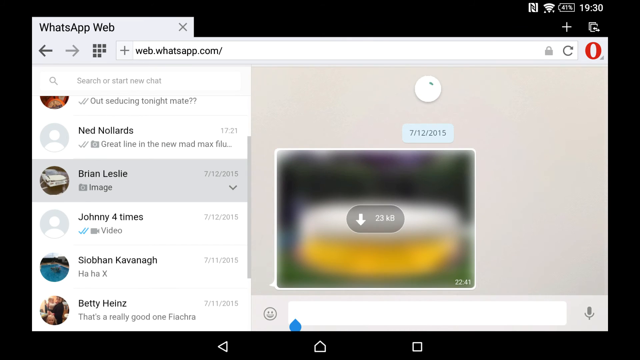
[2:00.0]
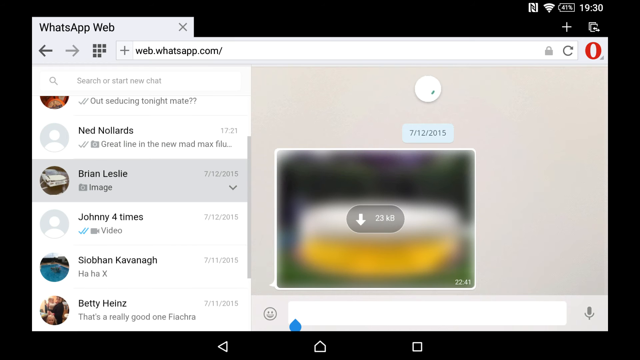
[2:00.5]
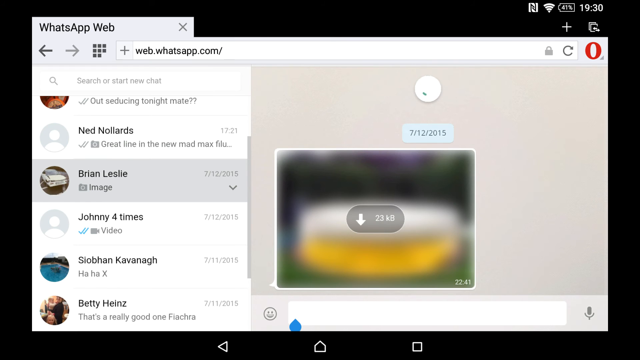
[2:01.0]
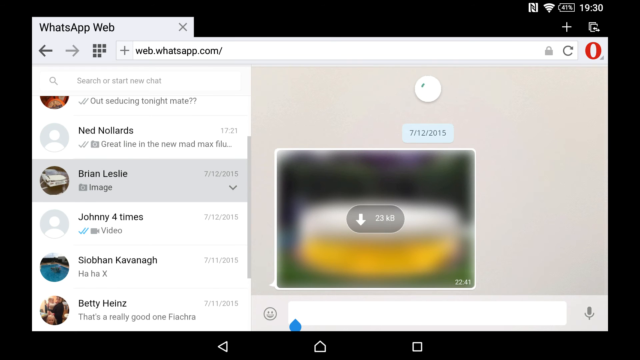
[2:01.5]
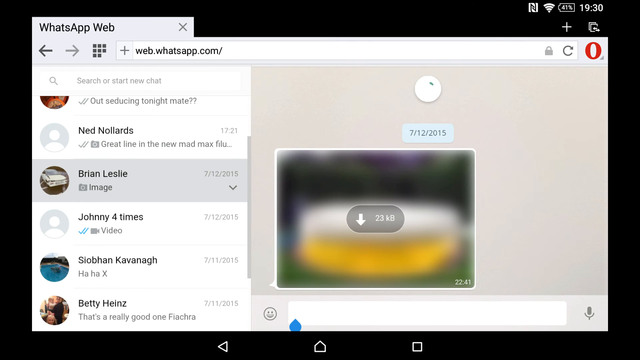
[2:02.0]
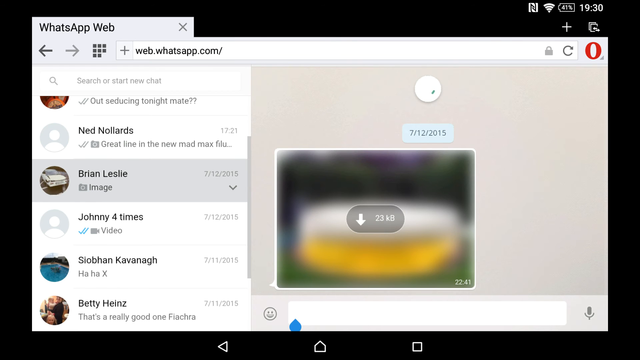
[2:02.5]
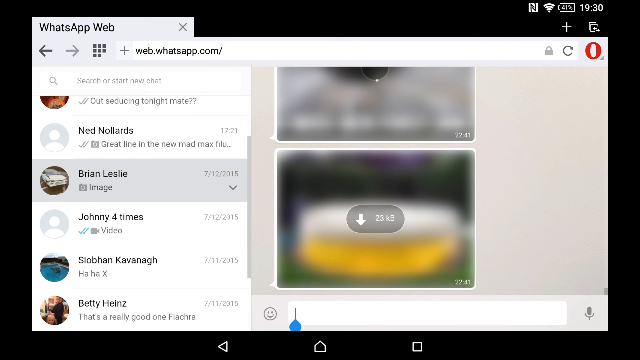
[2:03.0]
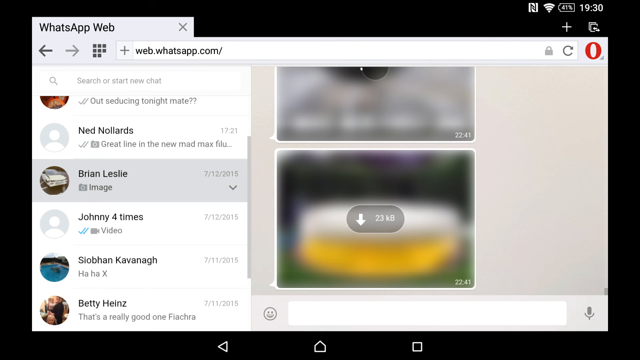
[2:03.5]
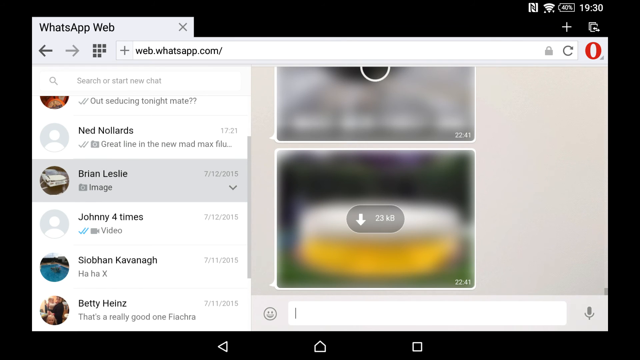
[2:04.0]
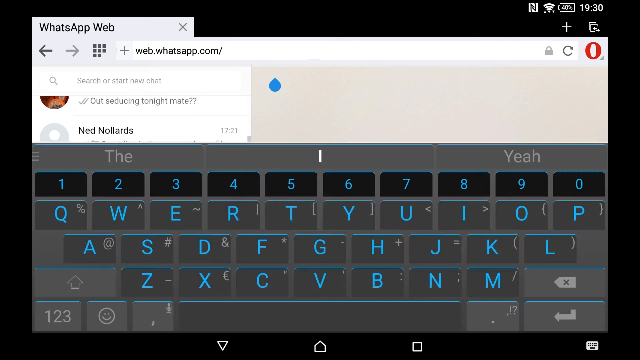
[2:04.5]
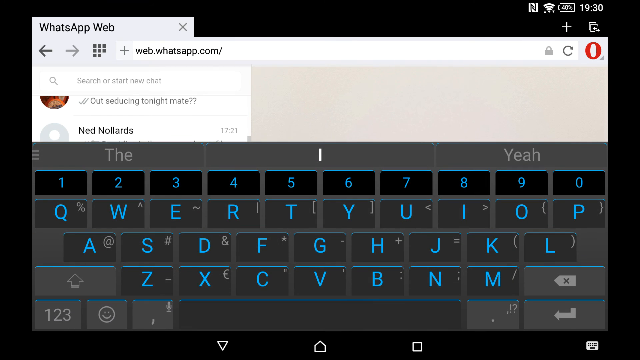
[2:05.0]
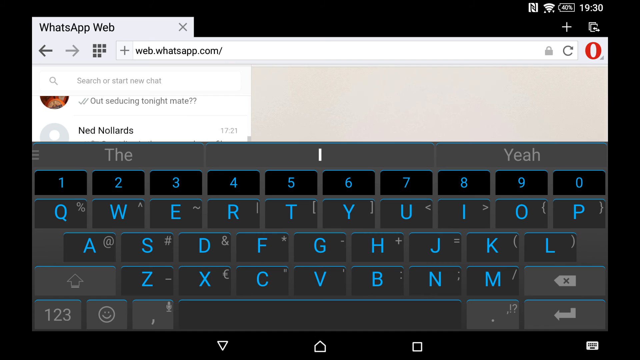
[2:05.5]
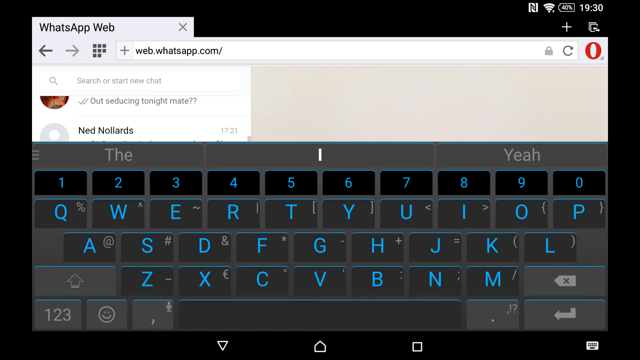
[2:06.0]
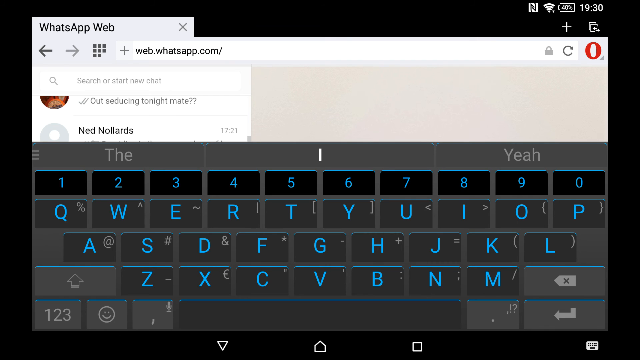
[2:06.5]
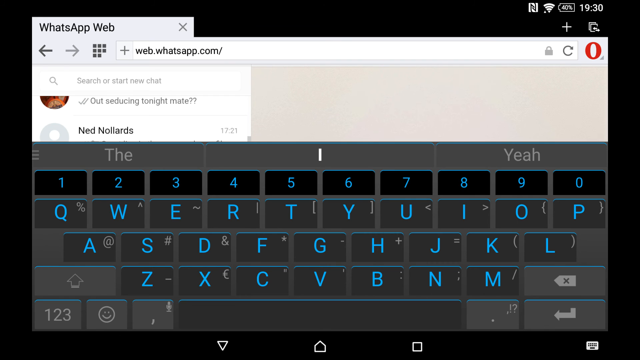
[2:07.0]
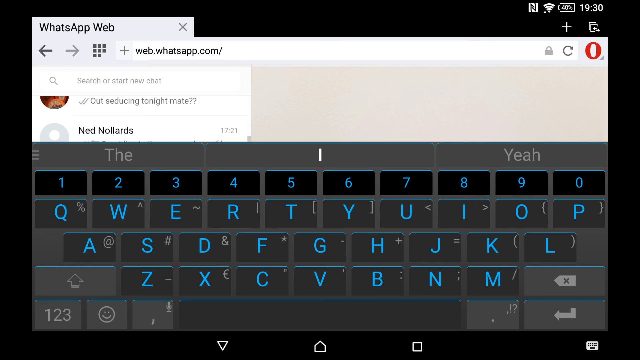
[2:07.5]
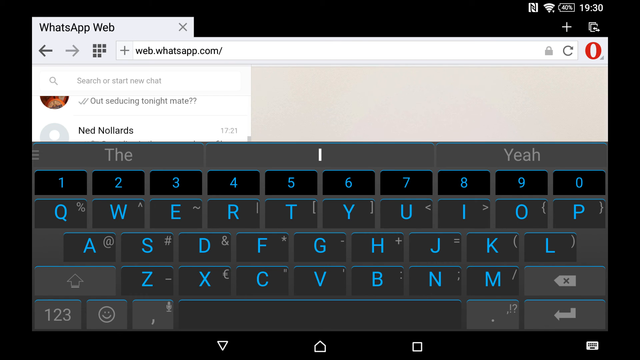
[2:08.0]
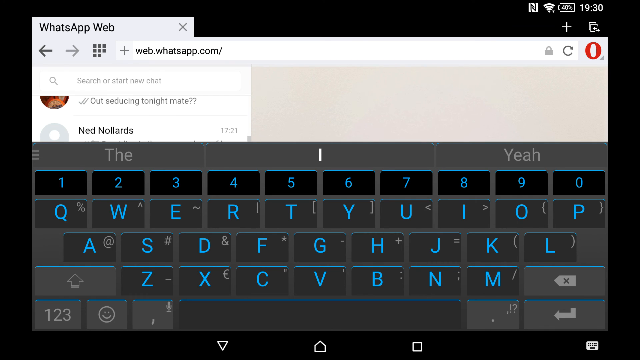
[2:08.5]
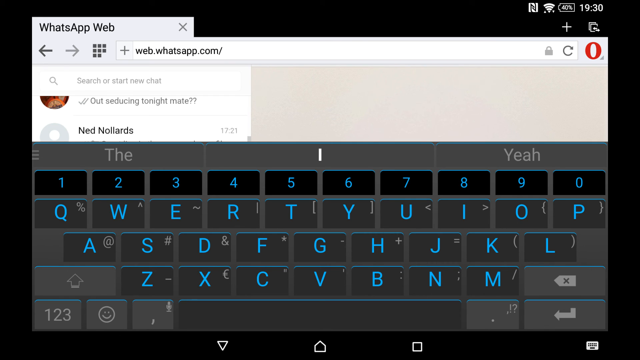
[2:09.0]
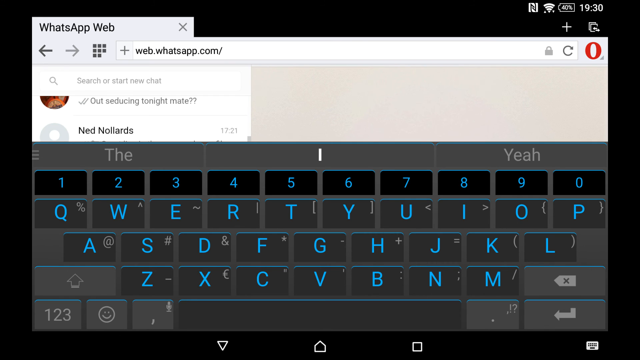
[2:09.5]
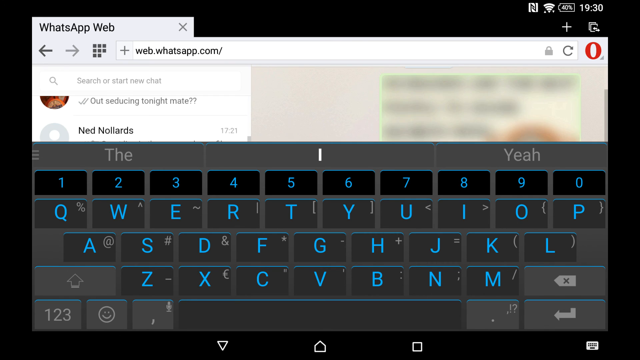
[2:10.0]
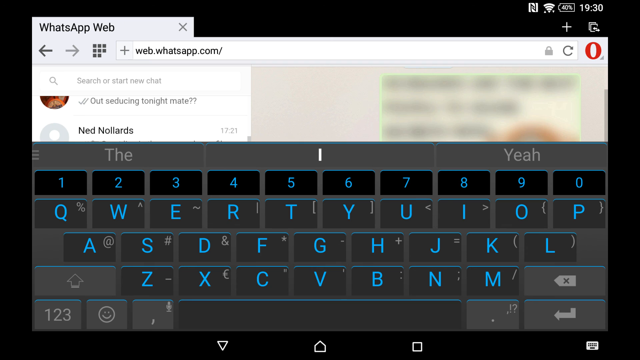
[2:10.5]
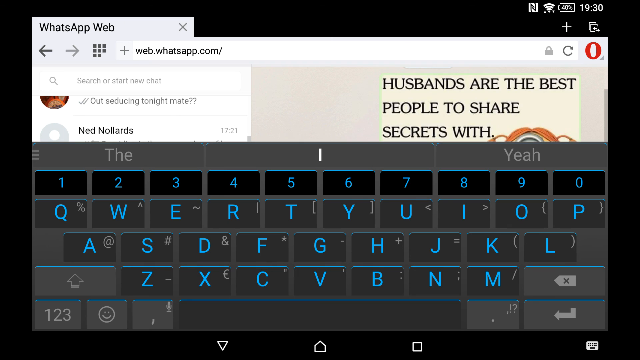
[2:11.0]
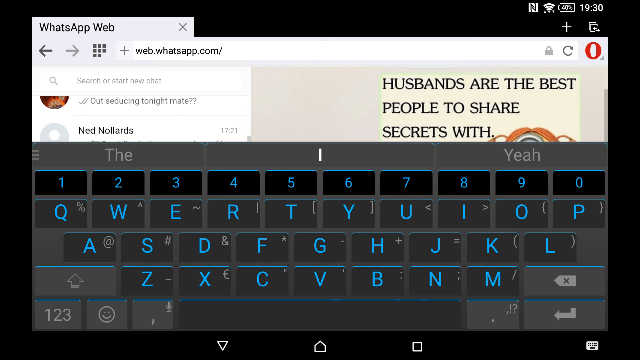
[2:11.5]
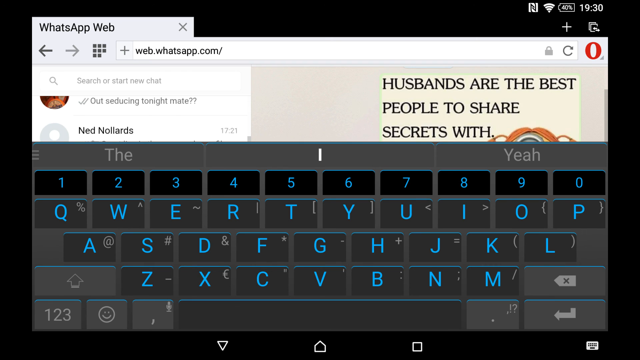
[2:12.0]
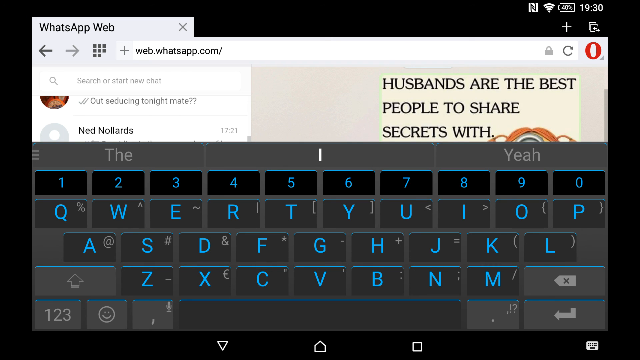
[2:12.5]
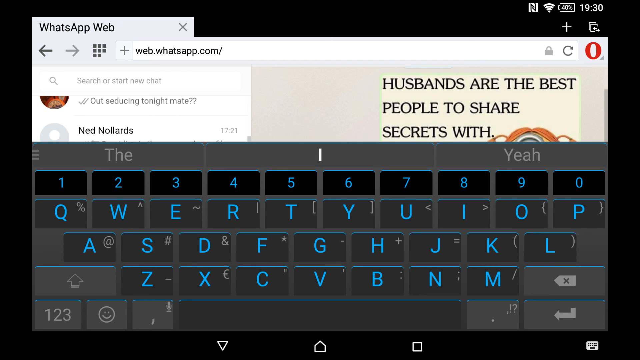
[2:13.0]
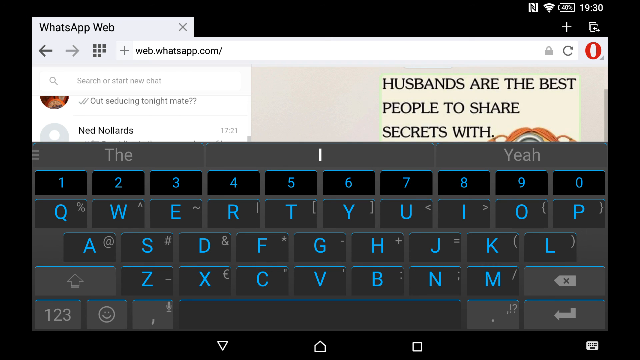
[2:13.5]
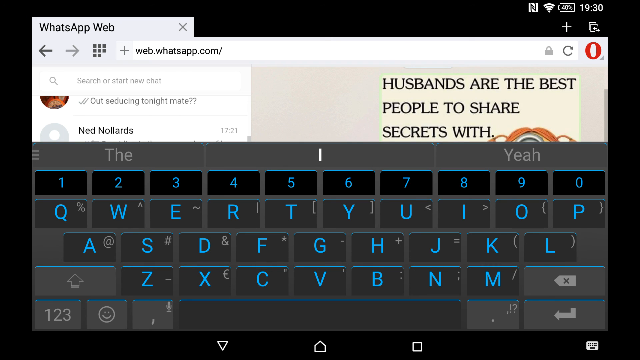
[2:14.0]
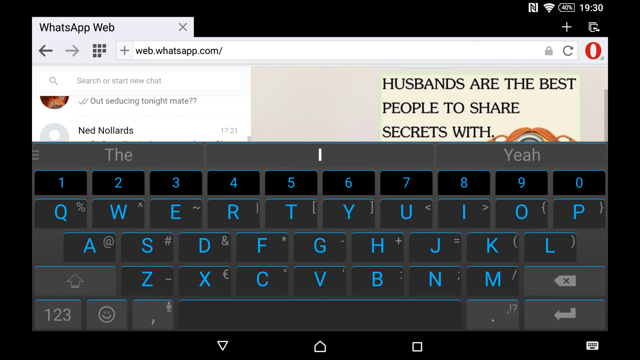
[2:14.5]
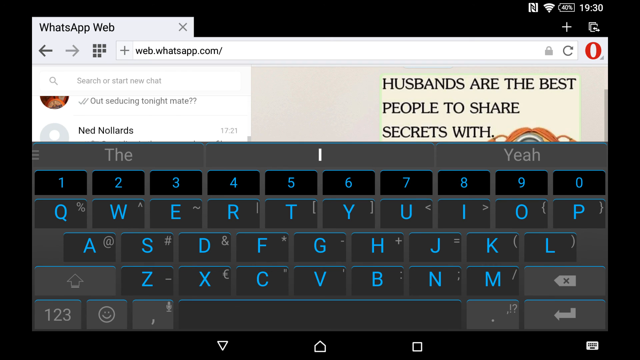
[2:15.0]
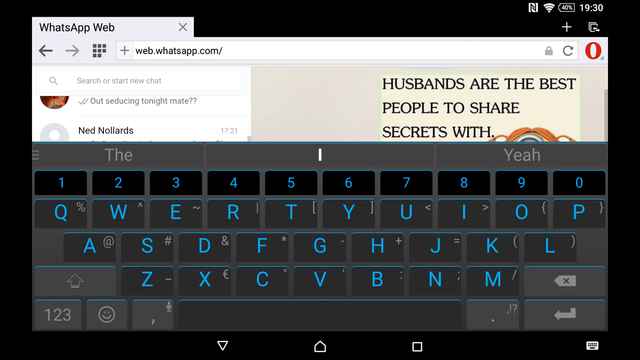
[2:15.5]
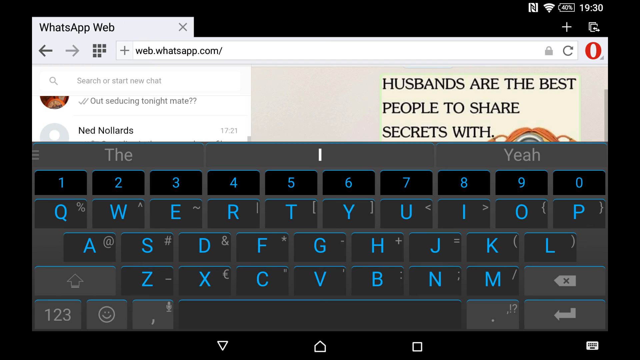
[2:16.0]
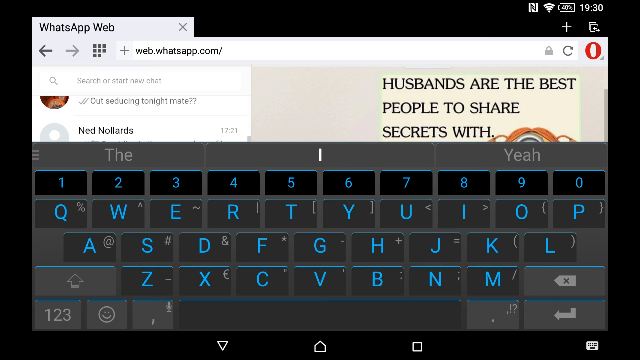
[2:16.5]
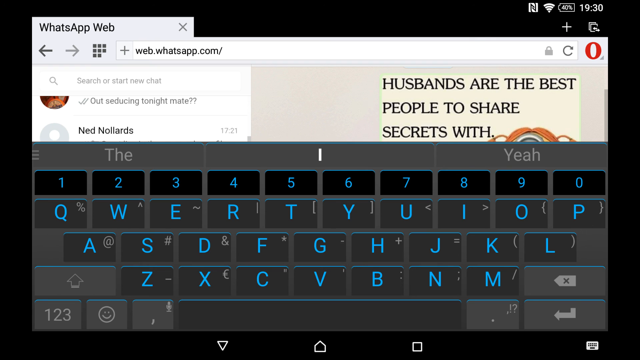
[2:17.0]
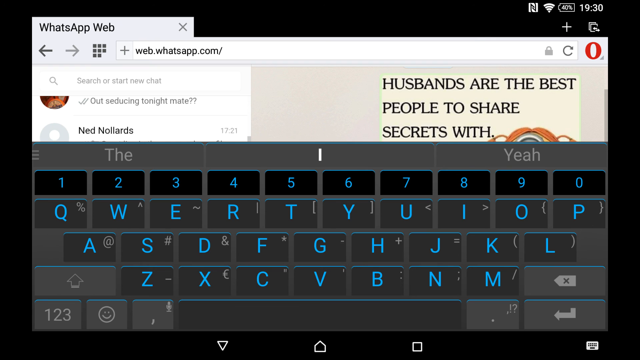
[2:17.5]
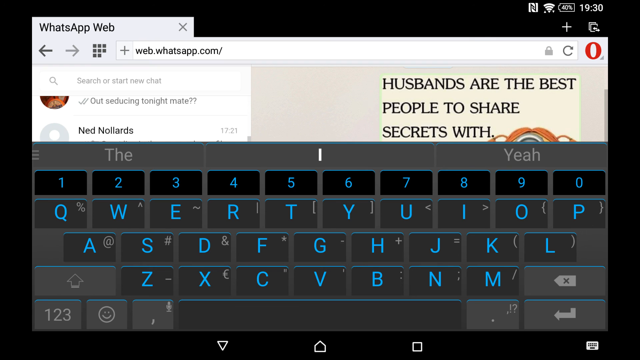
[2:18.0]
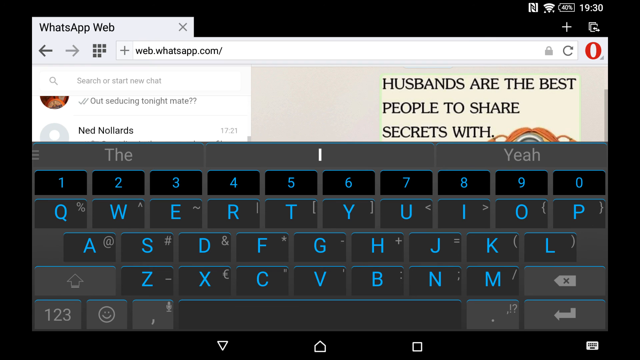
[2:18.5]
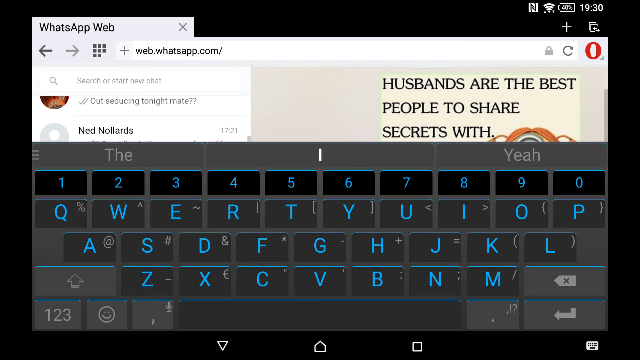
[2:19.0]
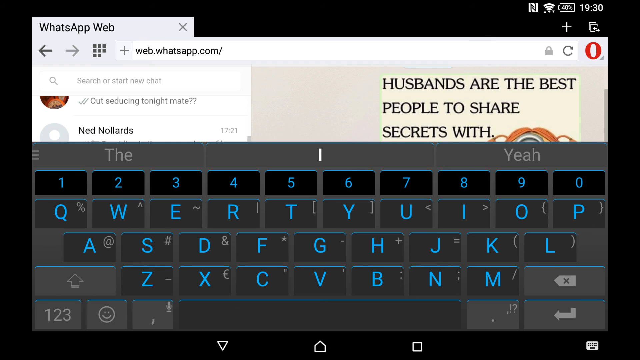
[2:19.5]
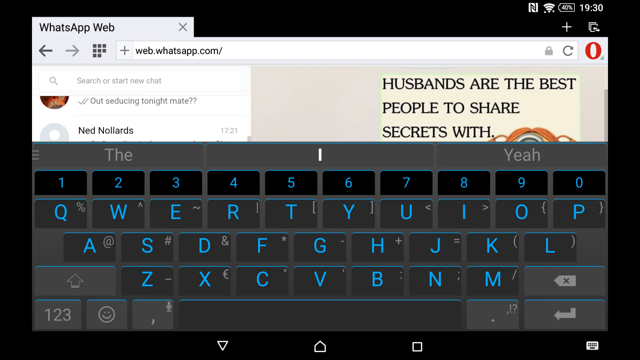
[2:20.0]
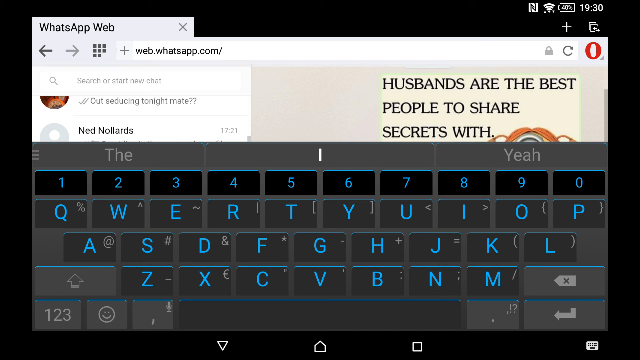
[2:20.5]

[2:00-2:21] The user appears to still be in the conversation with Brian Leslie. There is an image he sent on July 12th, 2015, which is blurry, so it cannot be made out. Another message says "husbands are the best people to share secrets with," so Brian Leslie is possibly the user's husband. The chat list apparently shows Nairn Orleans from the same day, Brian Leslie from months ago, Johnny Corzine from July 12th, 2015, Slobin Kavanaugh from July 11th, 2015, and Benny Hines from 7/11/2015. The time looks to be 19:30.